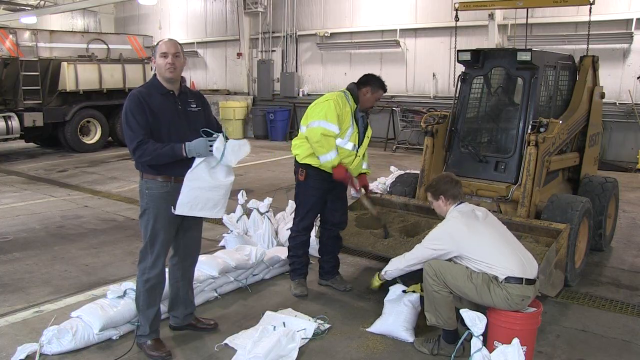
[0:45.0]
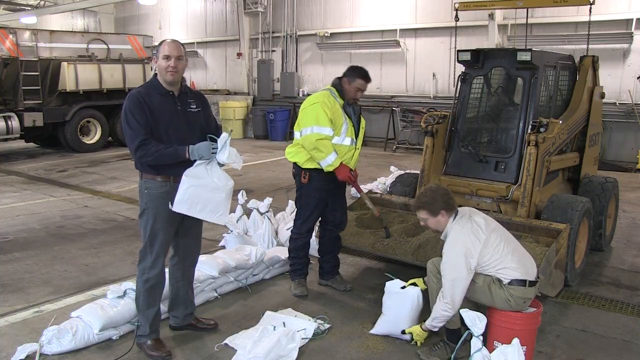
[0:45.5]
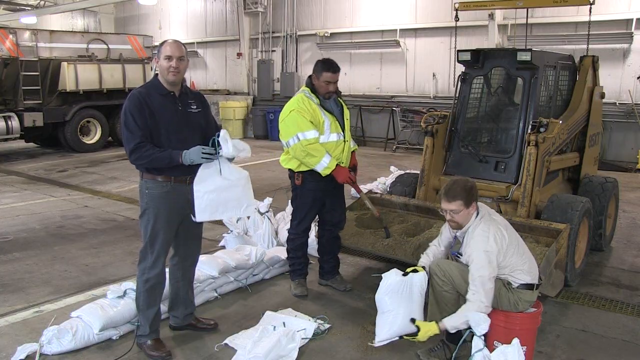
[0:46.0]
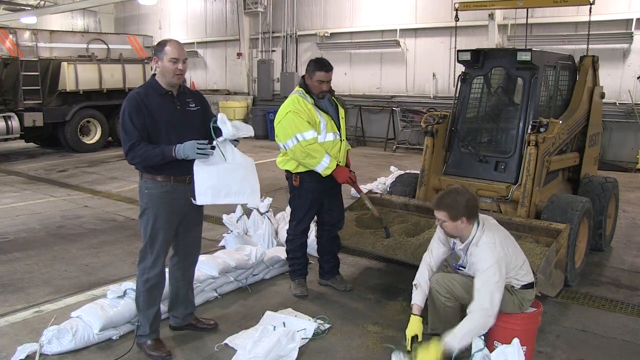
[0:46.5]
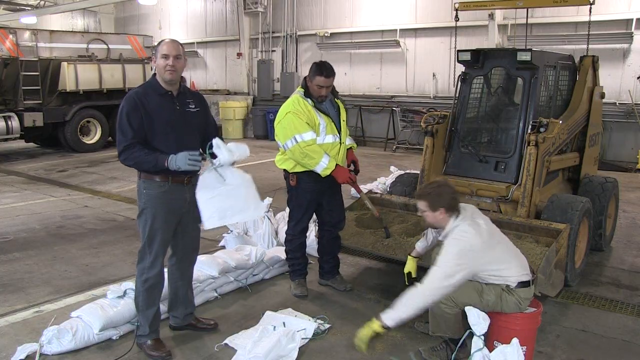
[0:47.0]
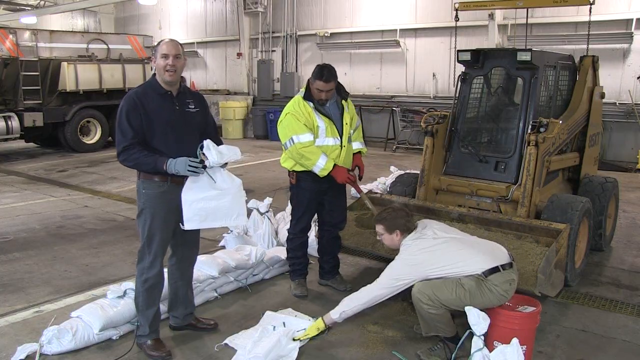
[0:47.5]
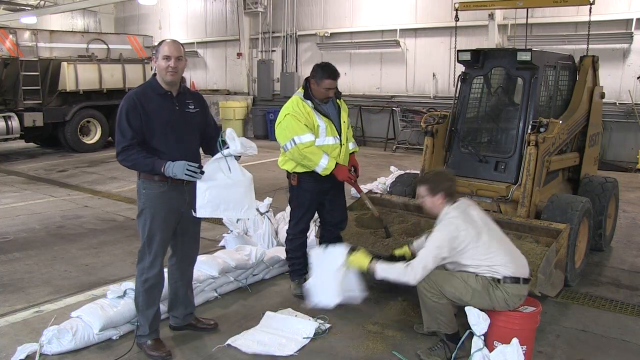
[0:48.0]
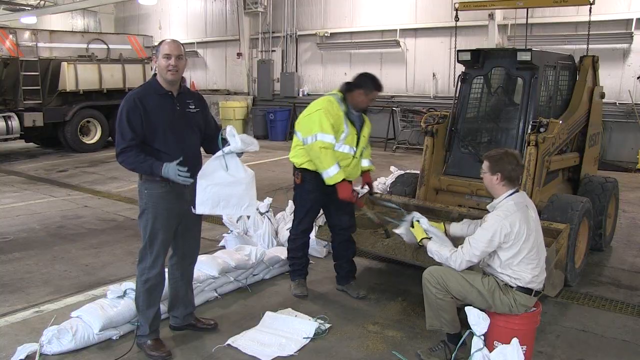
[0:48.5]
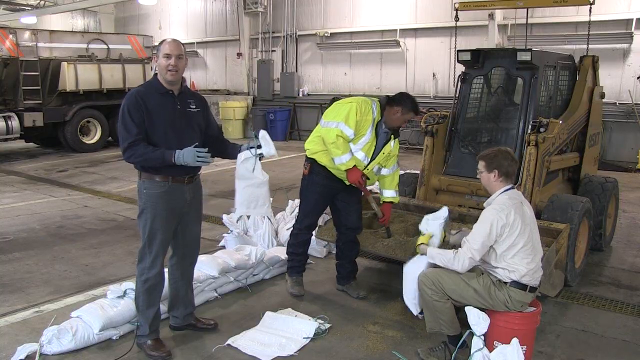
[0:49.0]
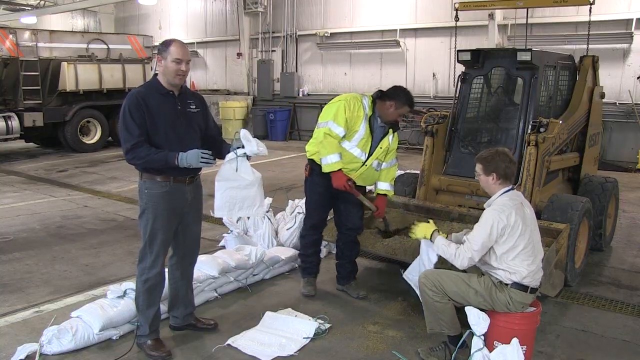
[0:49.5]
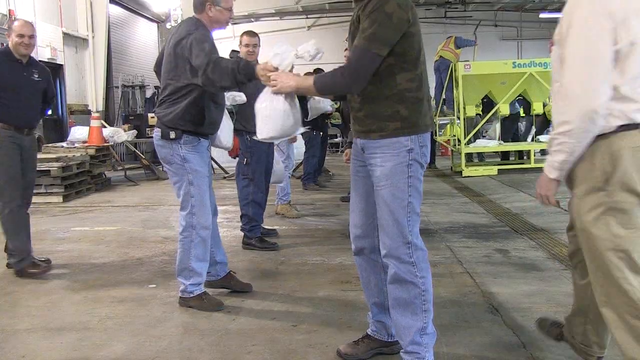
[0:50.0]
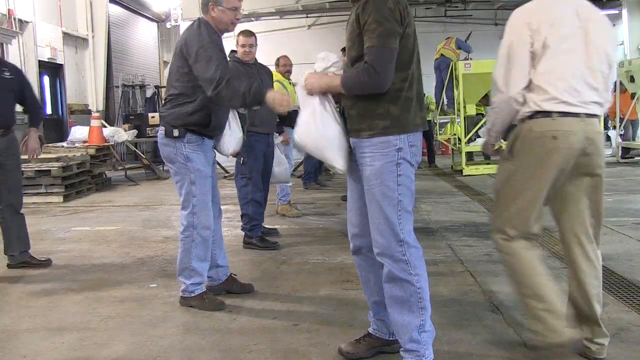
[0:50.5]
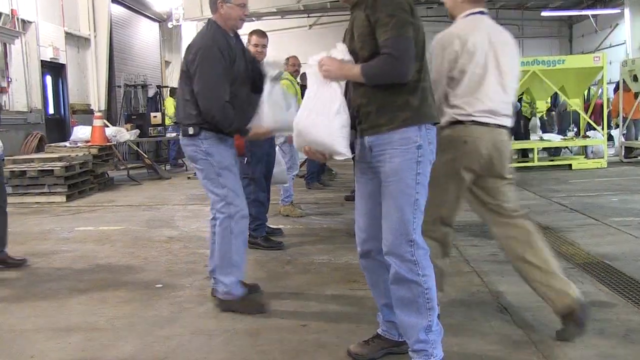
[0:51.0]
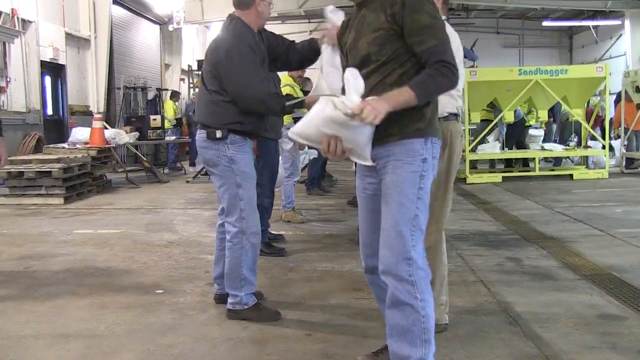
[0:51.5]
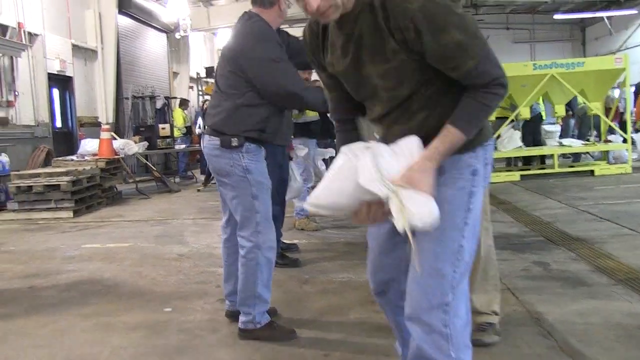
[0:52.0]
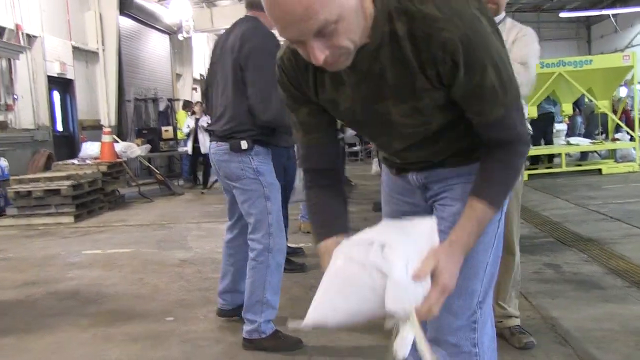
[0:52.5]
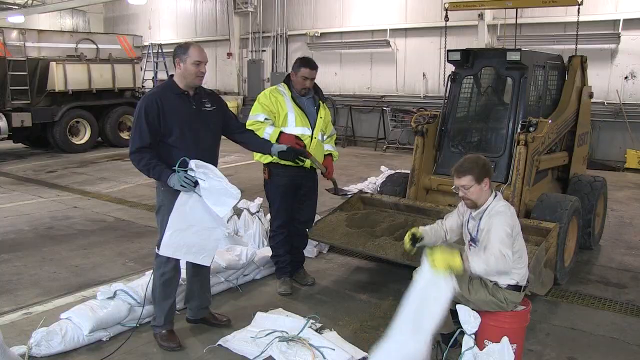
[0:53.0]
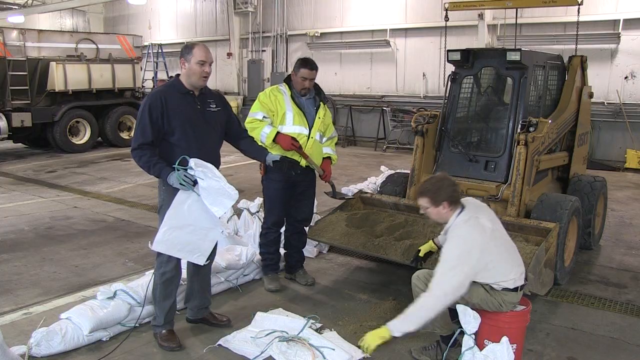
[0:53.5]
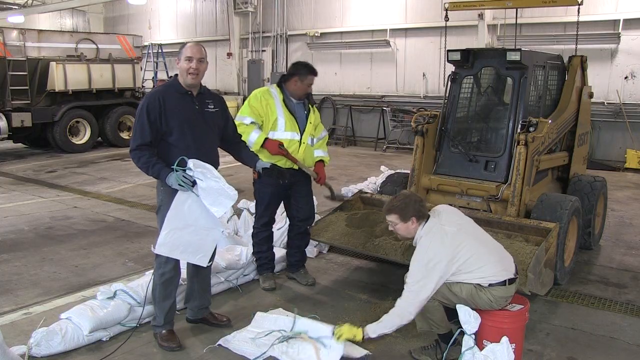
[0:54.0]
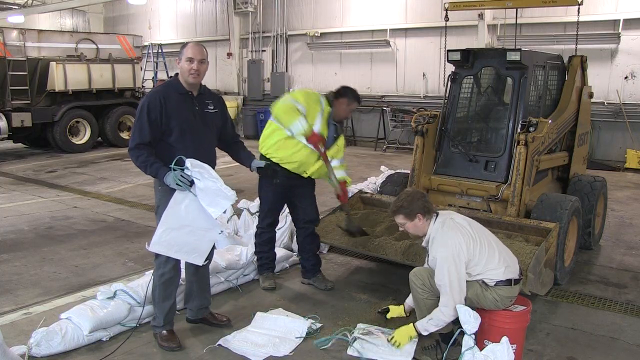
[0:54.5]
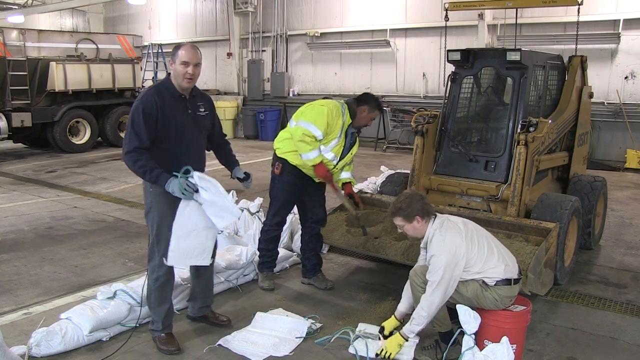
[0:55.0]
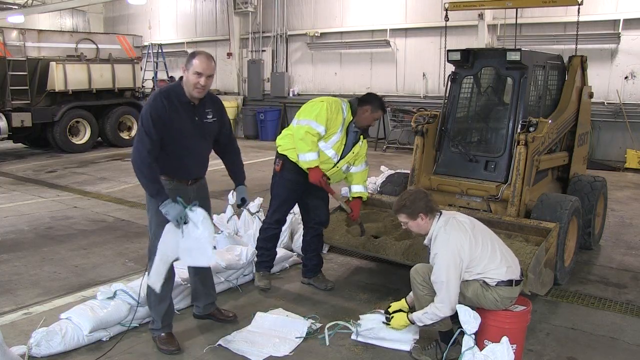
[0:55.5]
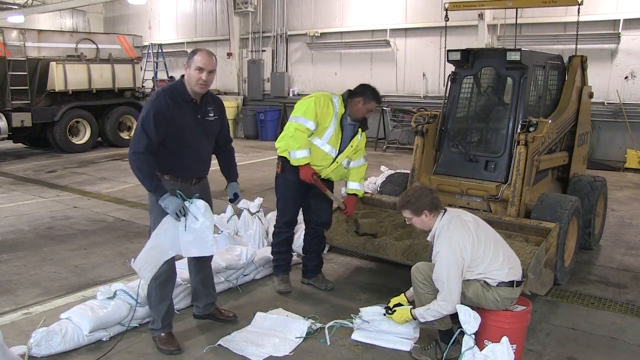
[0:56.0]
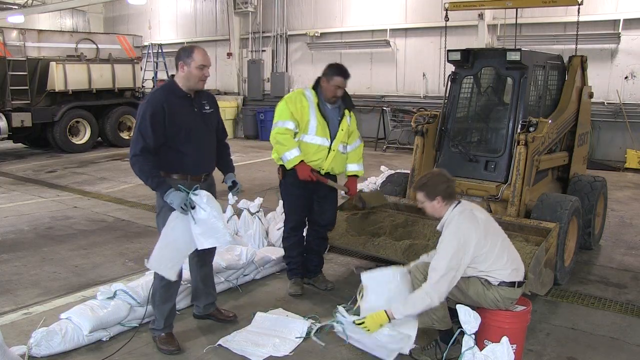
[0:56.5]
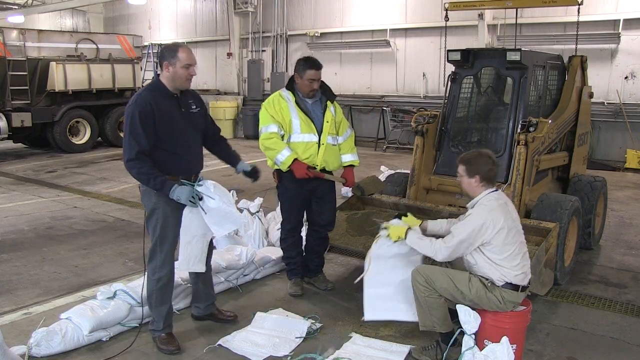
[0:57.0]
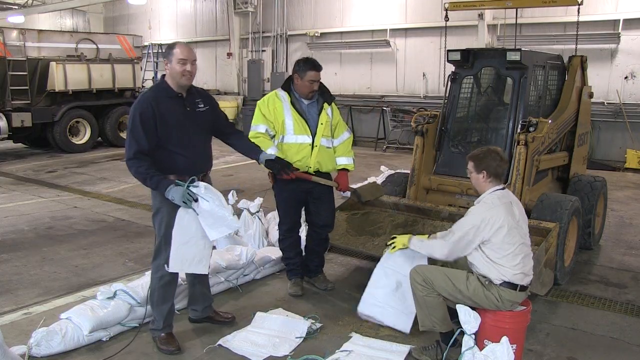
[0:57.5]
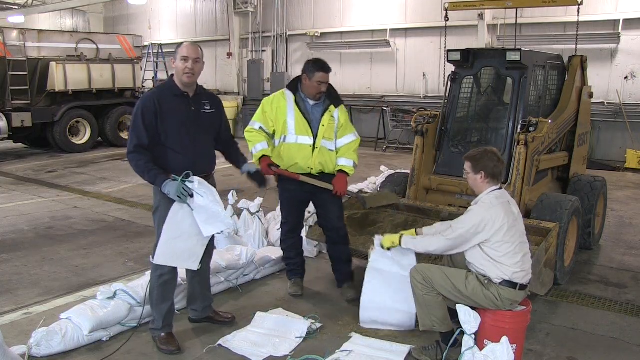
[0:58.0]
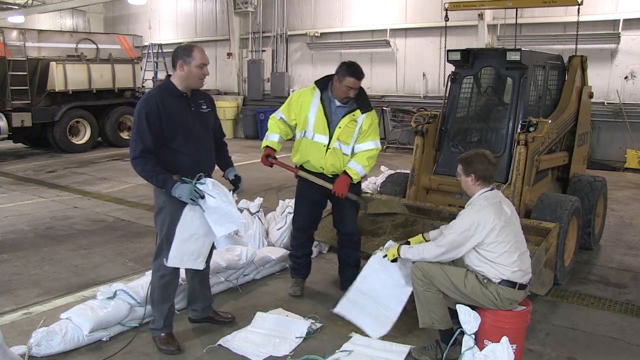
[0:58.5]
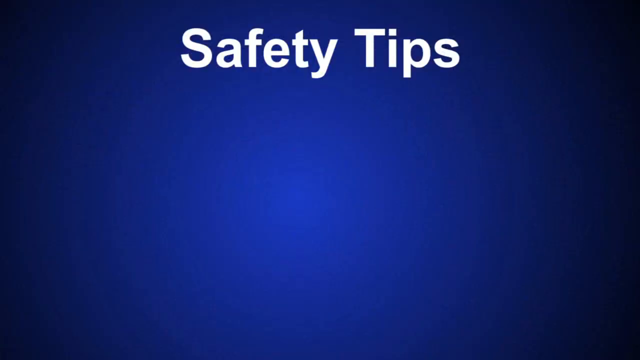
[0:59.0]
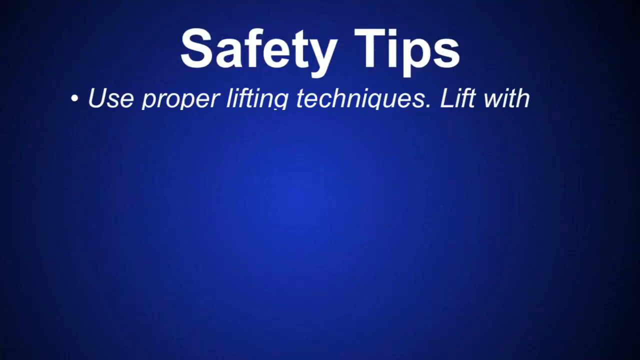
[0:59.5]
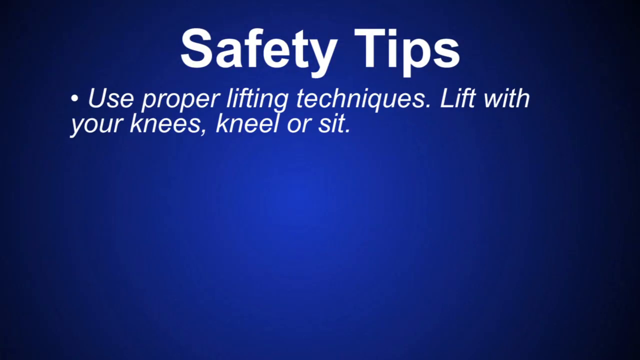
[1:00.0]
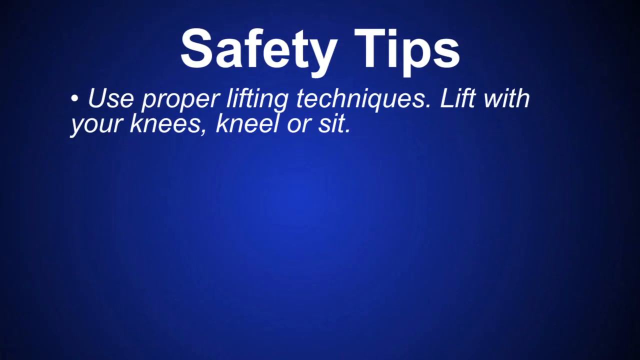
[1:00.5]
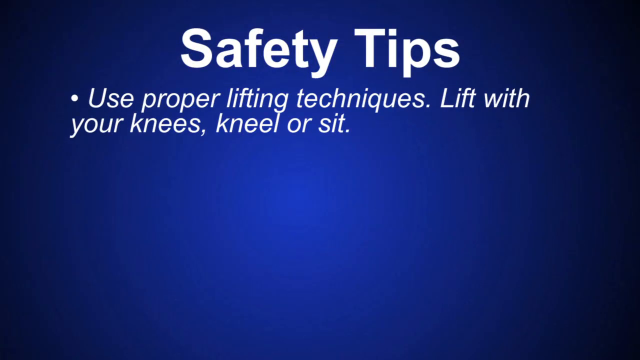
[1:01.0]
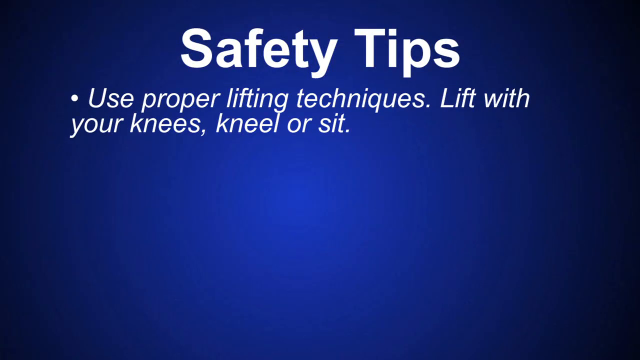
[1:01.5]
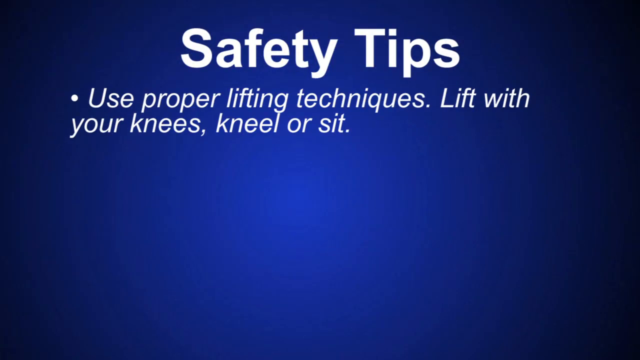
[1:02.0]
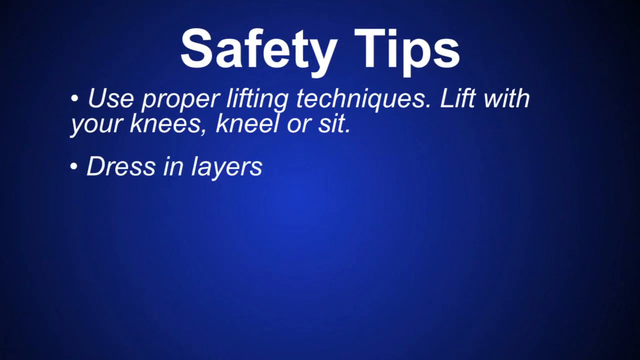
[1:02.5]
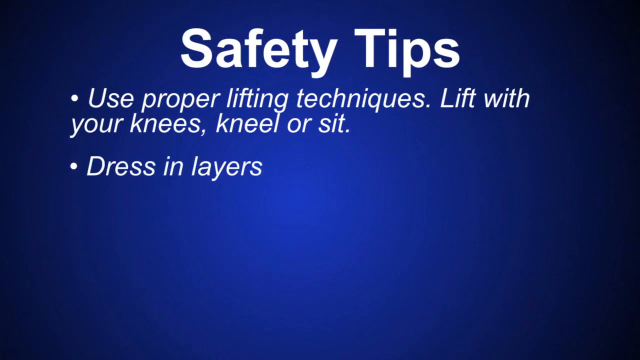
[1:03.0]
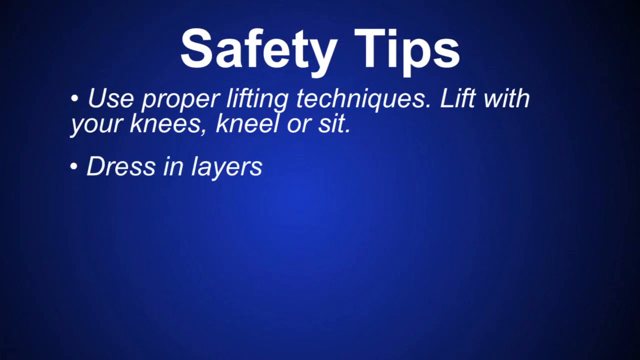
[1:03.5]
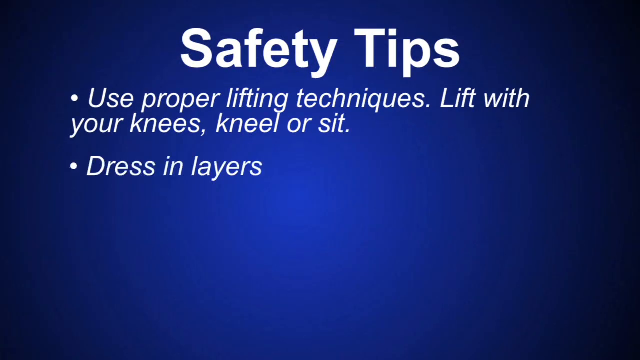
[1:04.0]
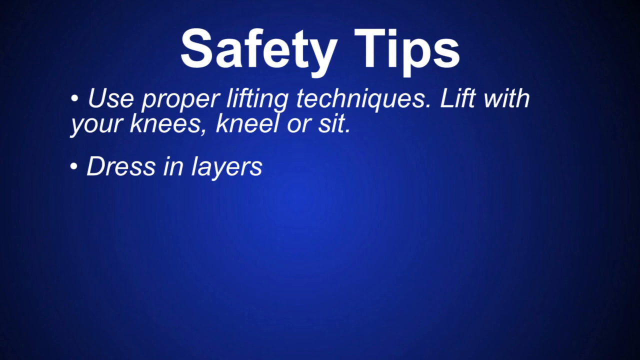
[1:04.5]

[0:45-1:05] The original speaker holds a partially empty sandbag while his colleagues behind him fill another sandbag from dirt within a machine. The video switches to a scene of other people filling and passing around sandbags. It then switches to a blue screen showing the words "safety tips" in white. The first bullet point says to use proper lifting techniques, such as bending with the knees, kneeling, or sitting when moving the sandbags. The second bullet point says to dress in layers.